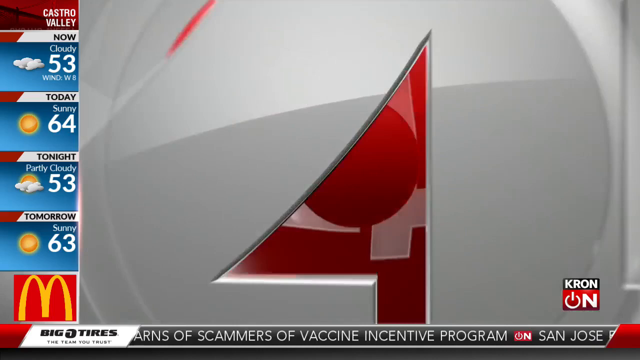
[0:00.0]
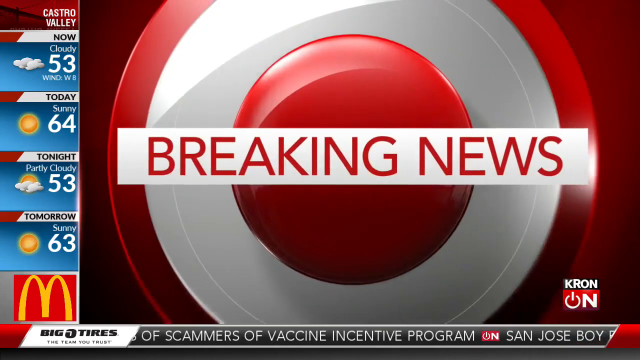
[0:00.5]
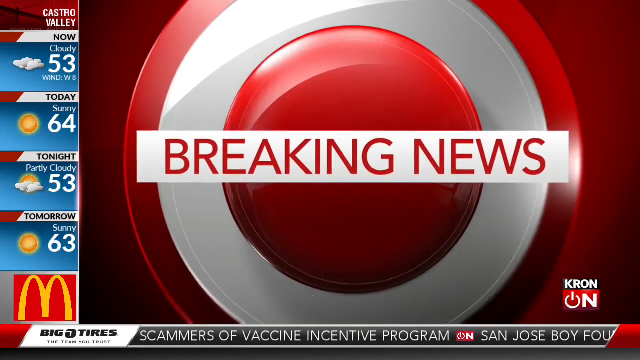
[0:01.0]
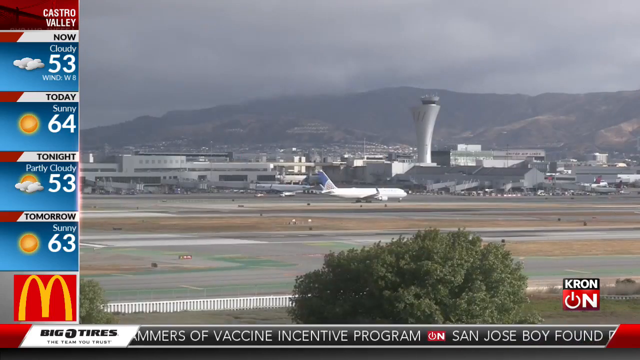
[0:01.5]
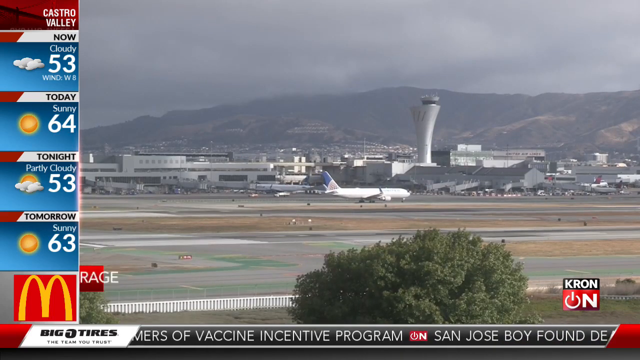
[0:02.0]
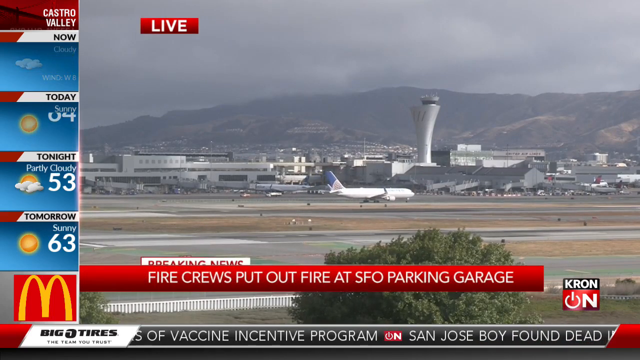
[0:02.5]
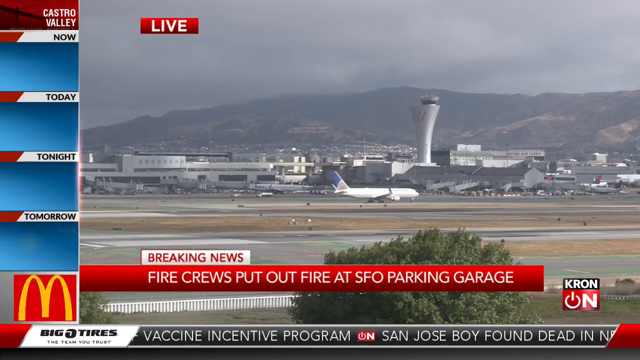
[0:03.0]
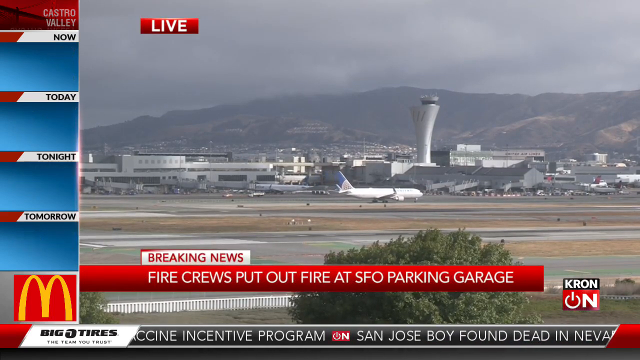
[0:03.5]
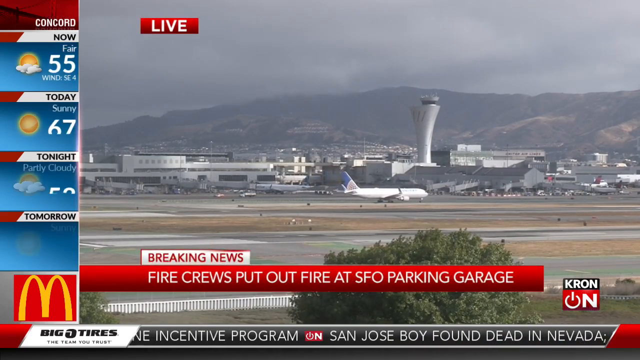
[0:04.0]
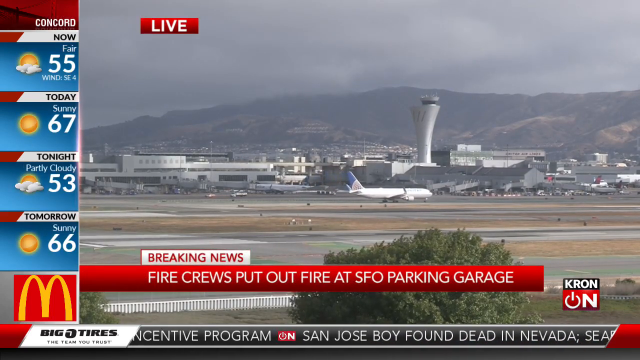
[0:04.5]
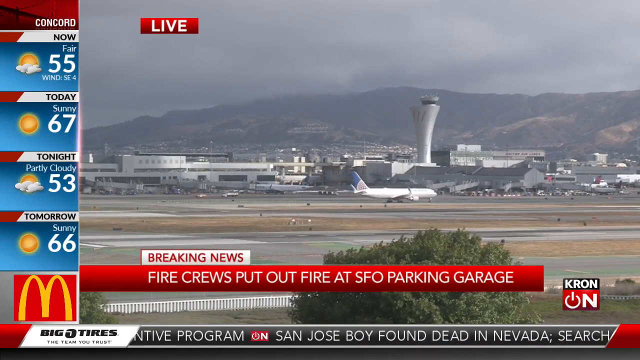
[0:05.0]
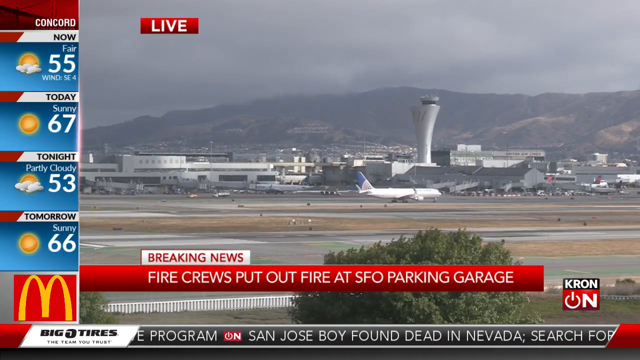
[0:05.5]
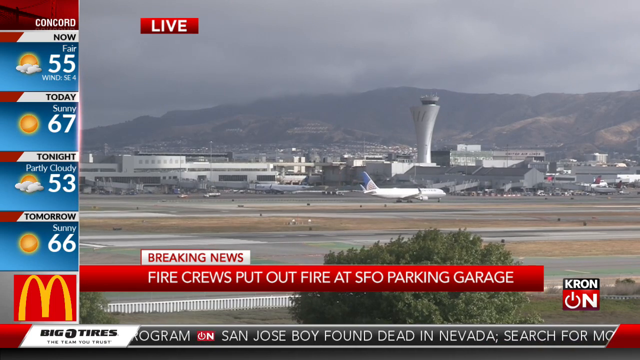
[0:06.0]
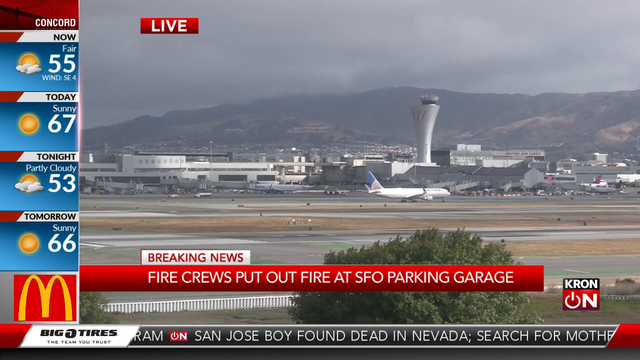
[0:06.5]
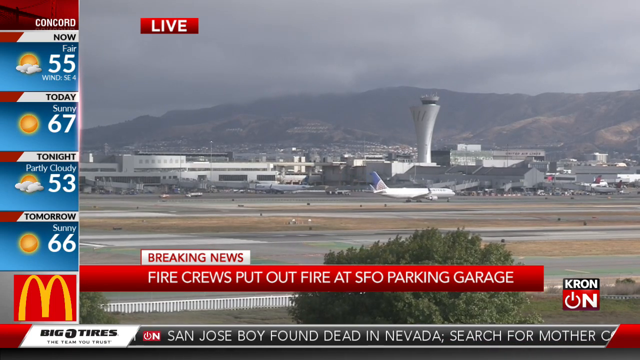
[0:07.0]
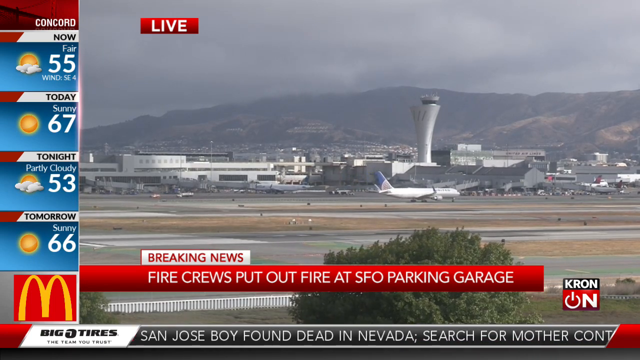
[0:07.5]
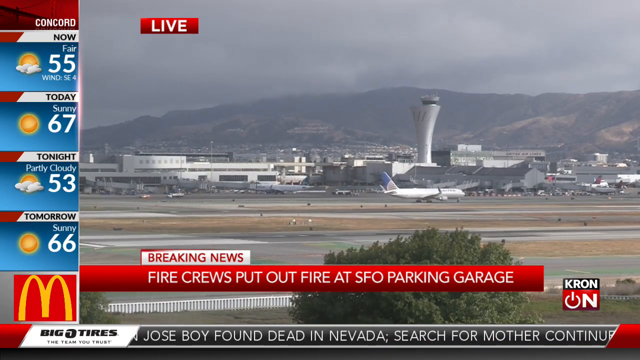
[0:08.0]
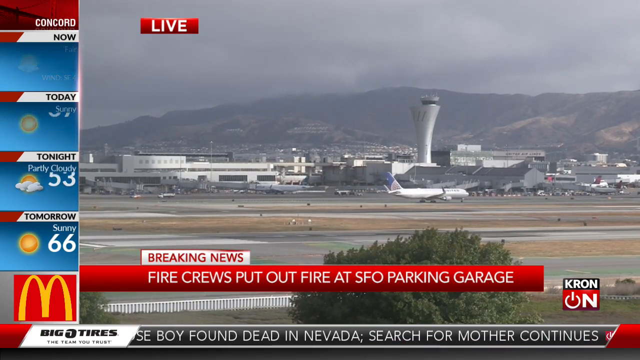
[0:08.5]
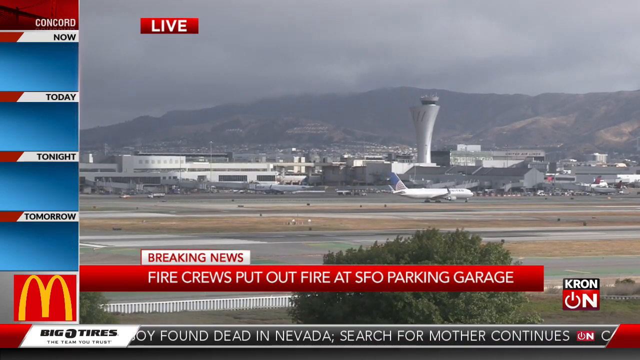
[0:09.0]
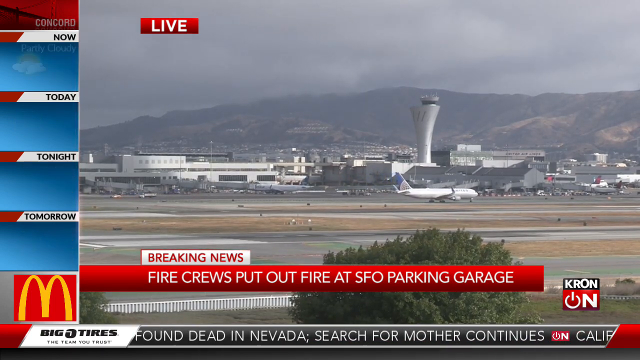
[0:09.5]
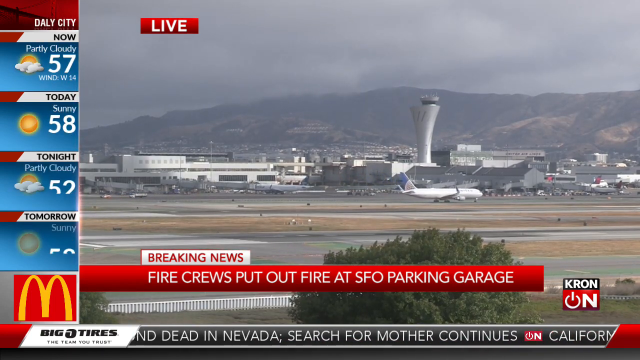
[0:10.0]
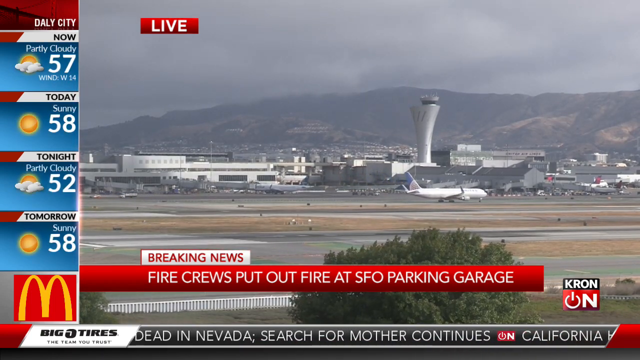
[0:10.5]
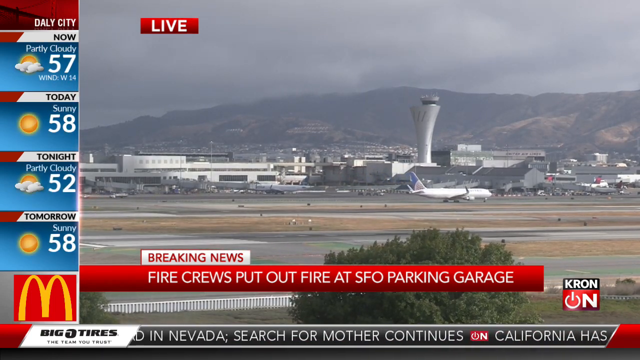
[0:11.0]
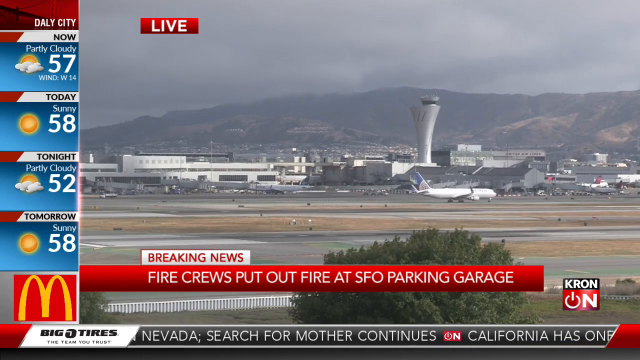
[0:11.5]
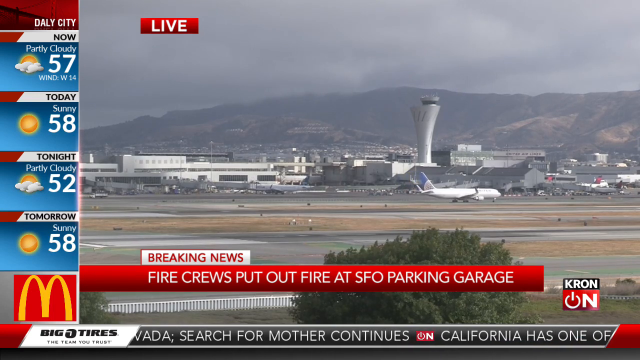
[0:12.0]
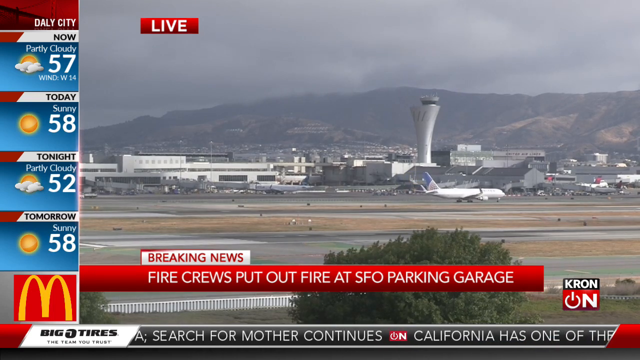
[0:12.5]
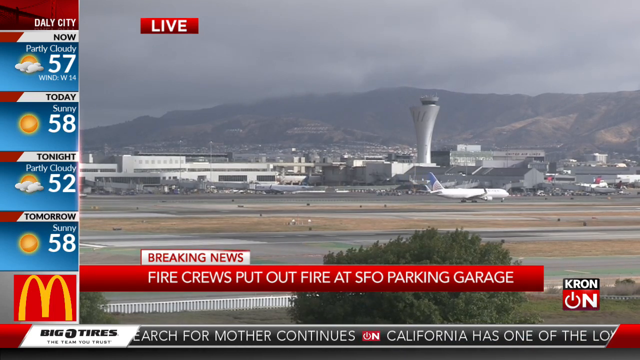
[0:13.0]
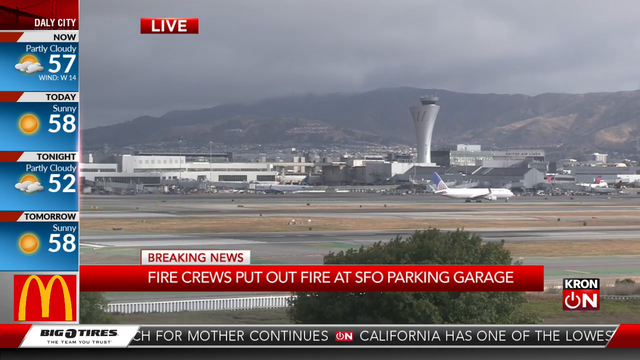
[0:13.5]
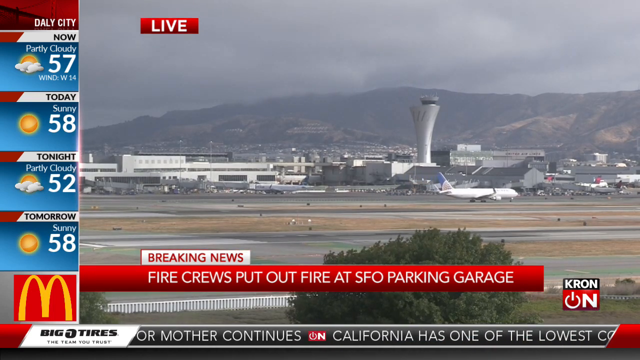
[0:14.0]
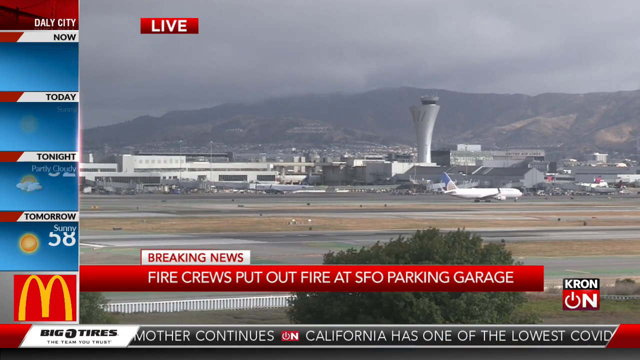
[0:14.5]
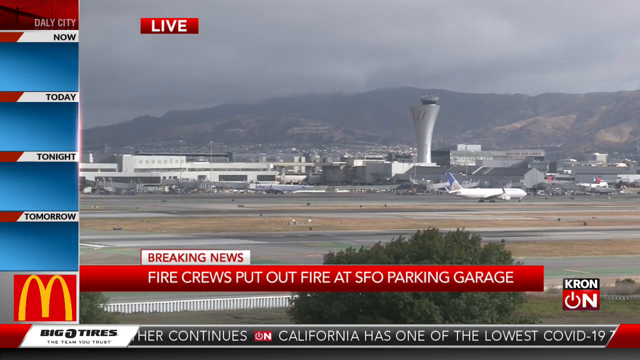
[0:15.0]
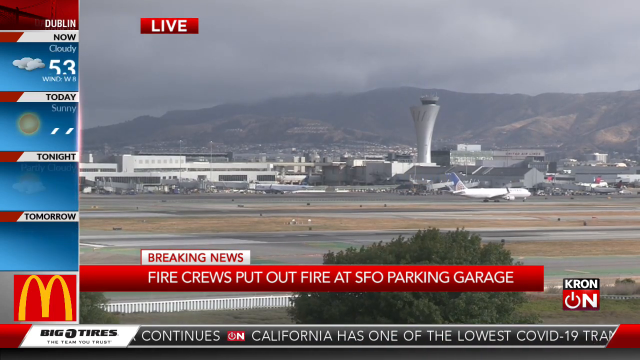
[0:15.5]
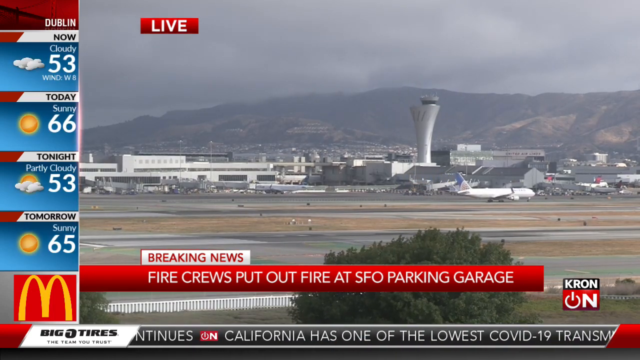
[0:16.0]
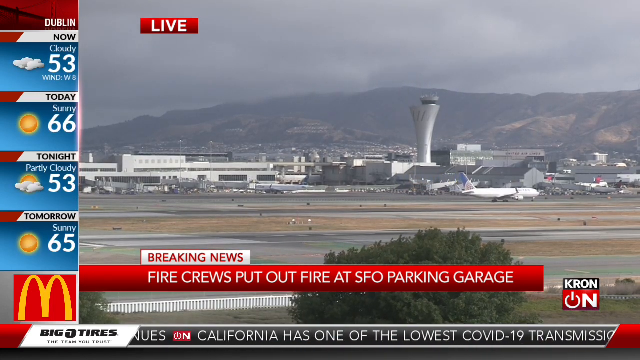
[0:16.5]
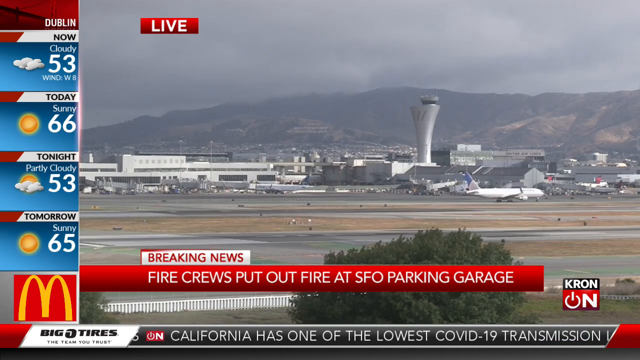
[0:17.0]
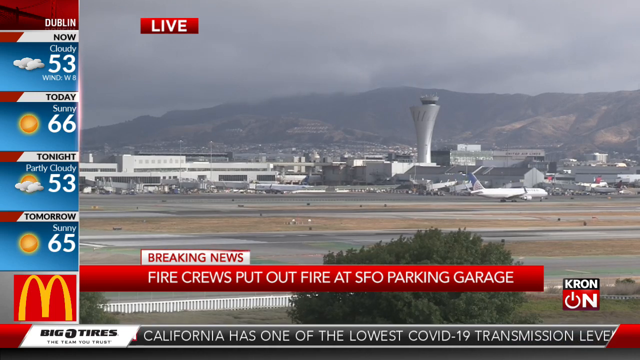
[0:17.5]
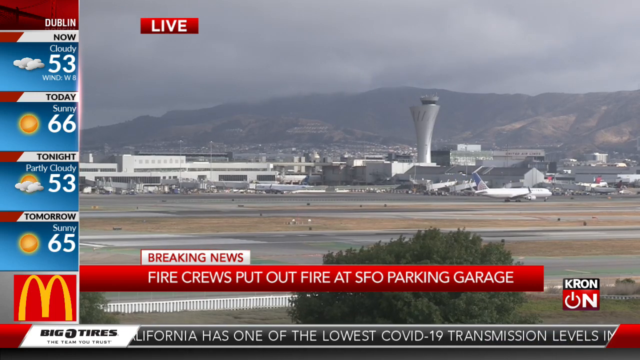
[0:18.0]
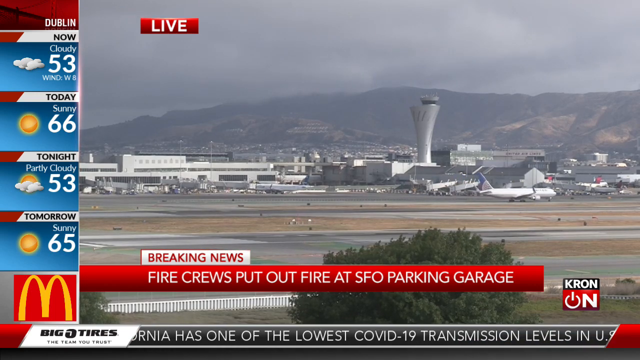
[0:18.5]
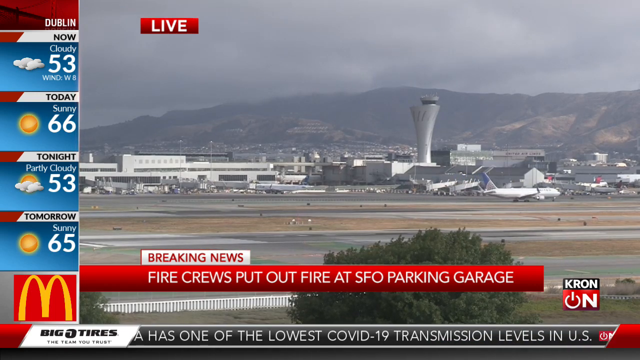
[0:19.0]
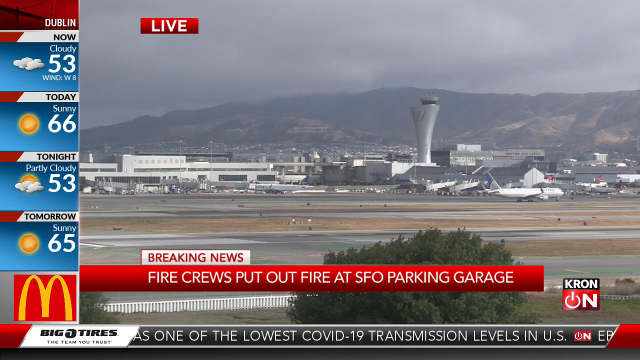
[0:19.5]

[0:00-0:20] An animation opens the video, with the words "breaking news" in red and white in the middle of the screen. On the left side of the screen, text reads "Castro Valley now cloudy 53 wind w8 today sunny 64 tonight partly cloudy 53 tomorrow sunny 63," with the McDonald's logo underneath. Next comes footage of what looks to be an airline: an airplane rolls by, and in the background there are several big buildings and mountains, with several dark clouds at a far distance. At the bottom center of the screen, red and white text reads "breaking news fire crews put out fire at SFO parking garage." The video is in a rectangular shape, and the outdoor footage has a good amount of natural light, so everything is clear and visible.